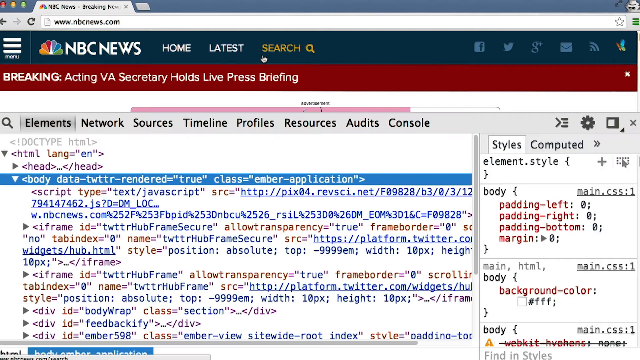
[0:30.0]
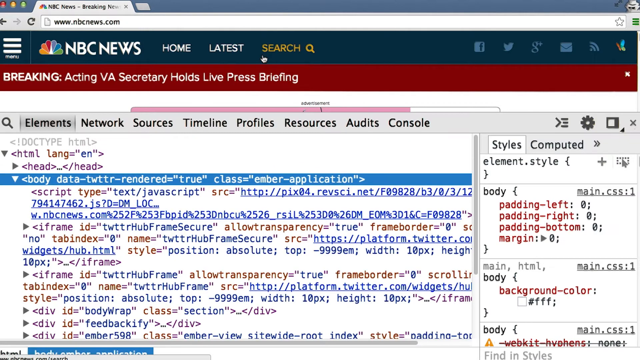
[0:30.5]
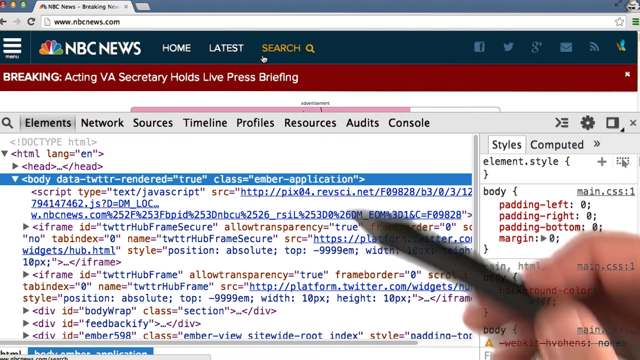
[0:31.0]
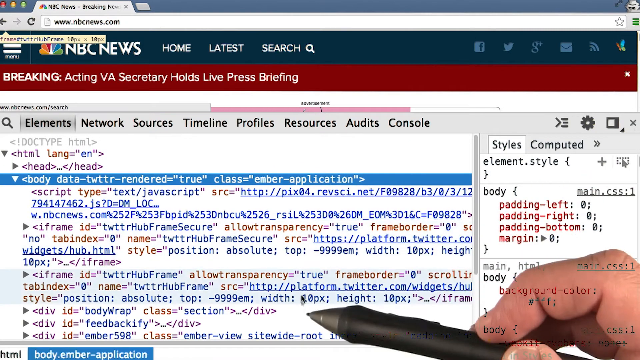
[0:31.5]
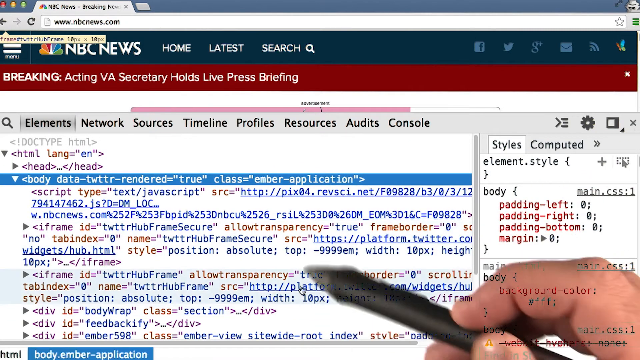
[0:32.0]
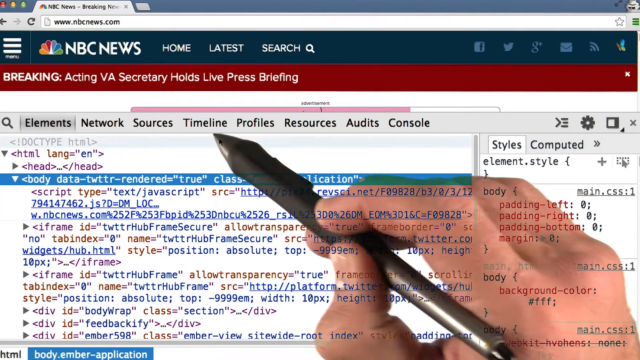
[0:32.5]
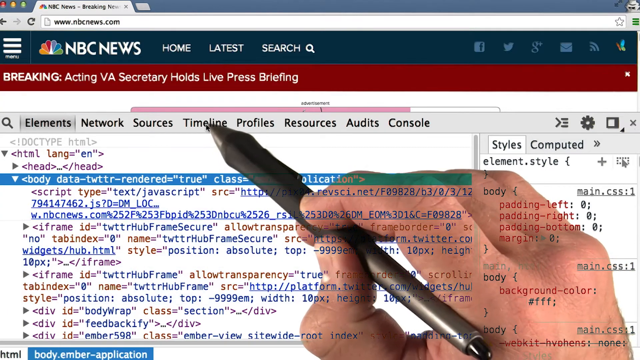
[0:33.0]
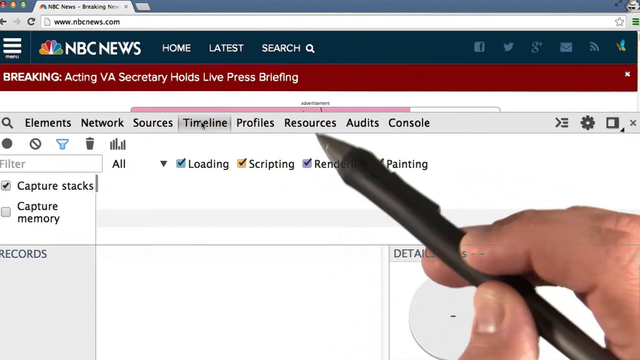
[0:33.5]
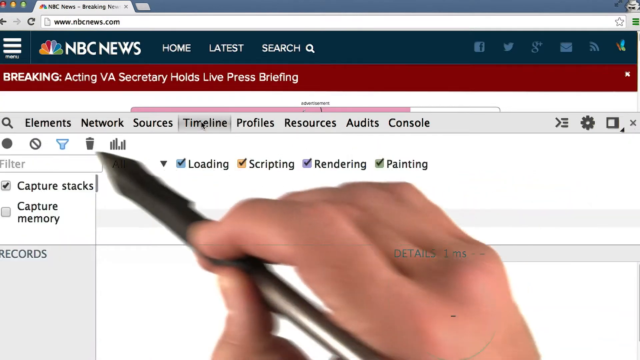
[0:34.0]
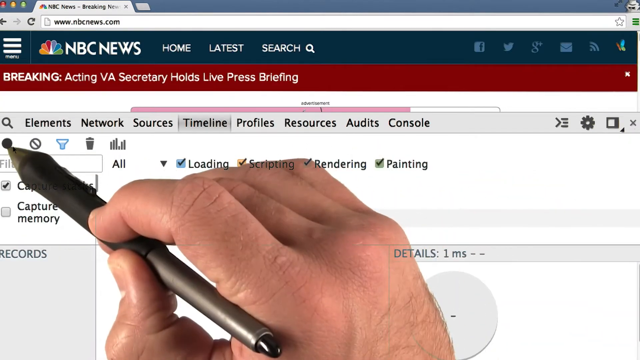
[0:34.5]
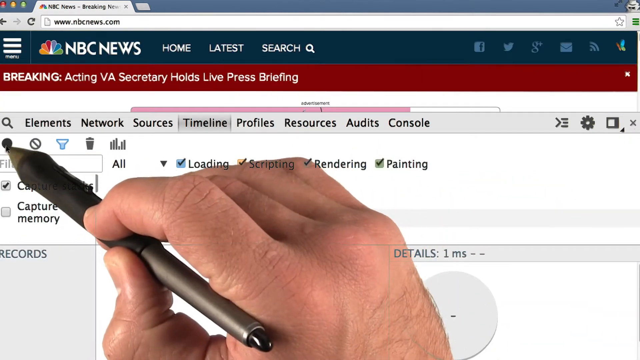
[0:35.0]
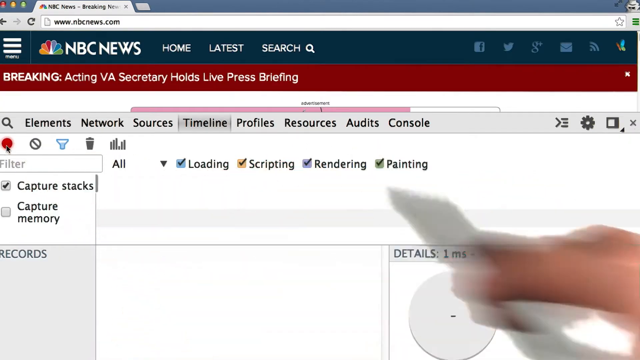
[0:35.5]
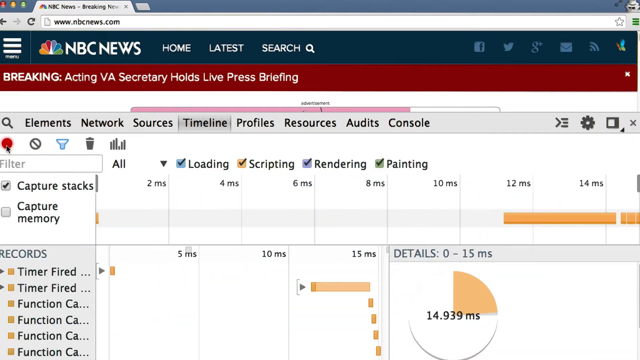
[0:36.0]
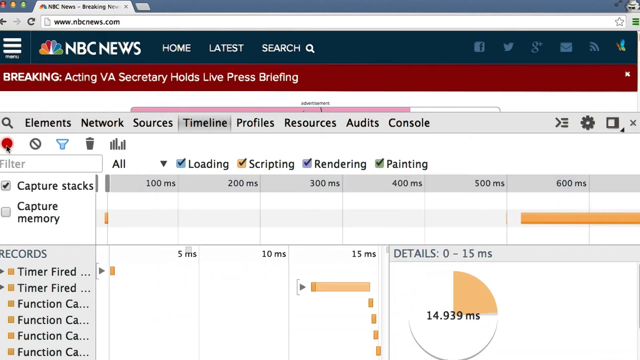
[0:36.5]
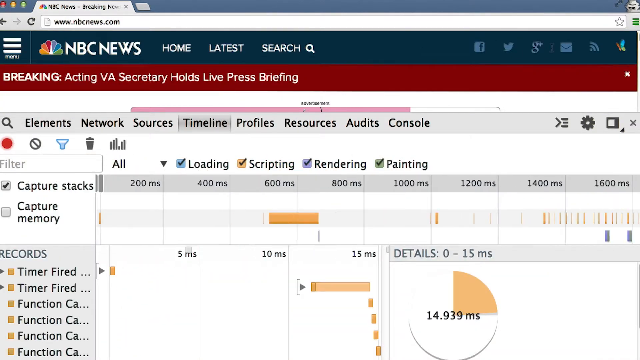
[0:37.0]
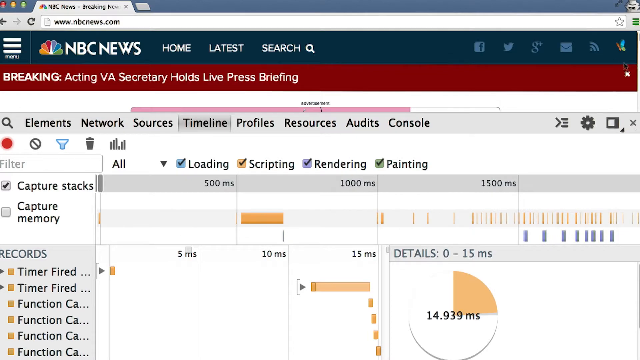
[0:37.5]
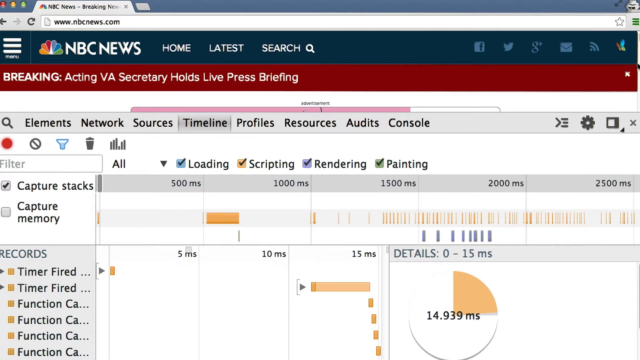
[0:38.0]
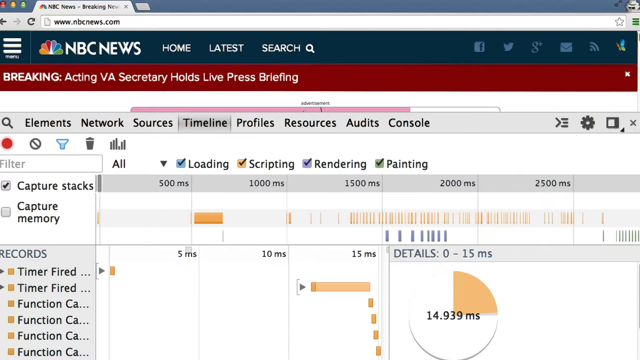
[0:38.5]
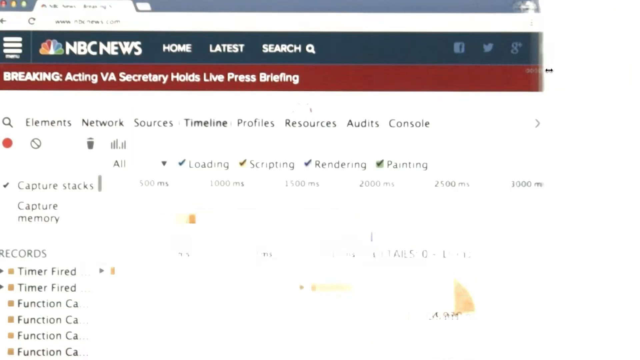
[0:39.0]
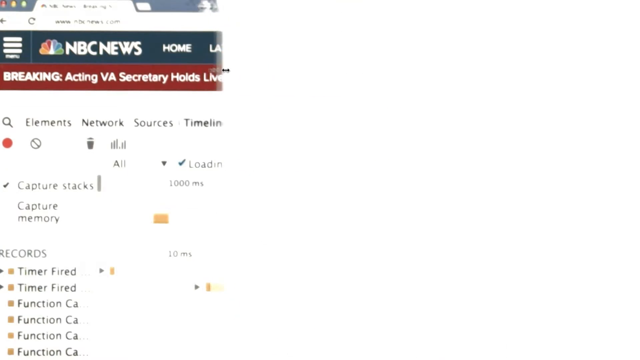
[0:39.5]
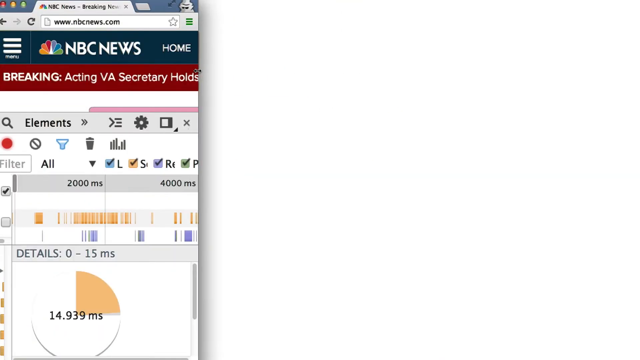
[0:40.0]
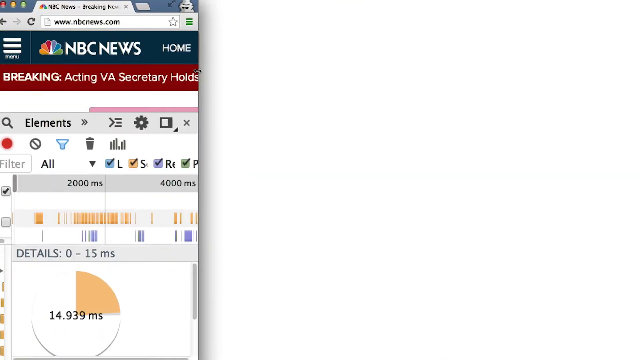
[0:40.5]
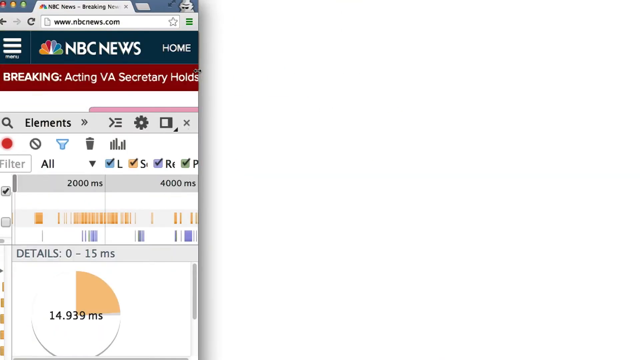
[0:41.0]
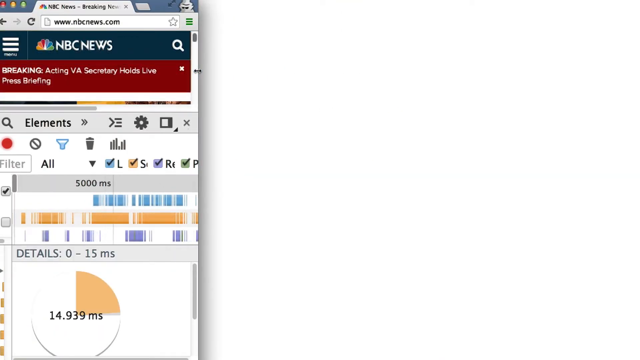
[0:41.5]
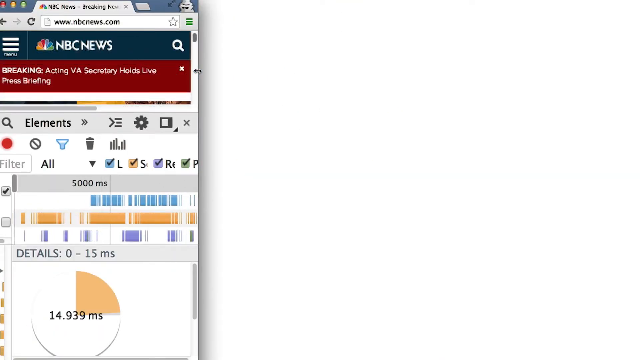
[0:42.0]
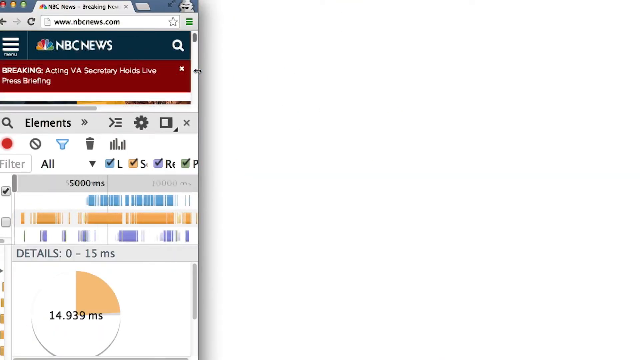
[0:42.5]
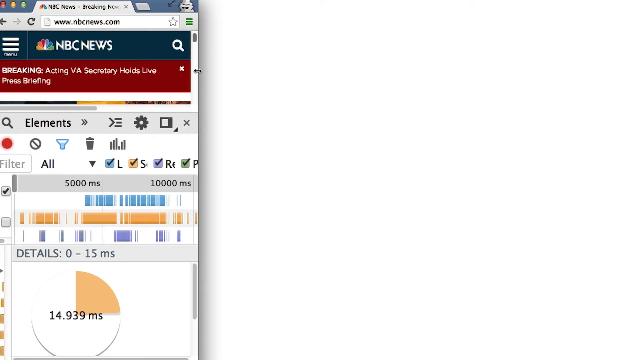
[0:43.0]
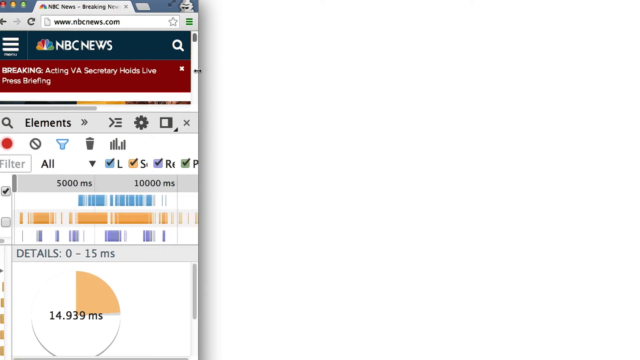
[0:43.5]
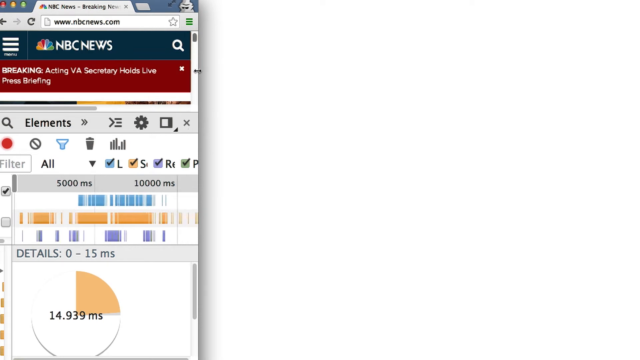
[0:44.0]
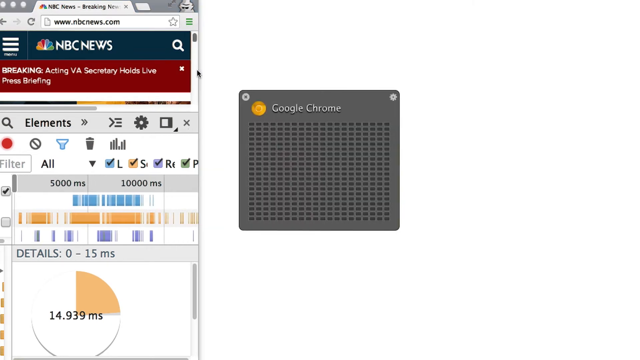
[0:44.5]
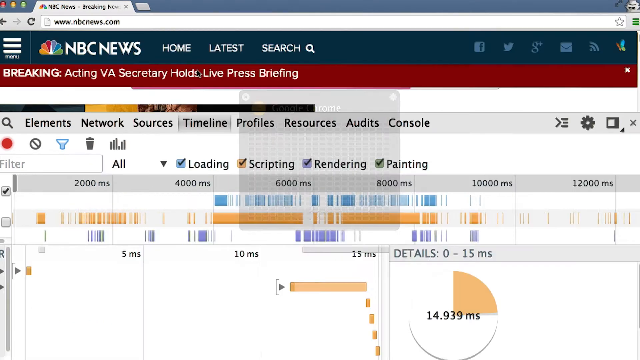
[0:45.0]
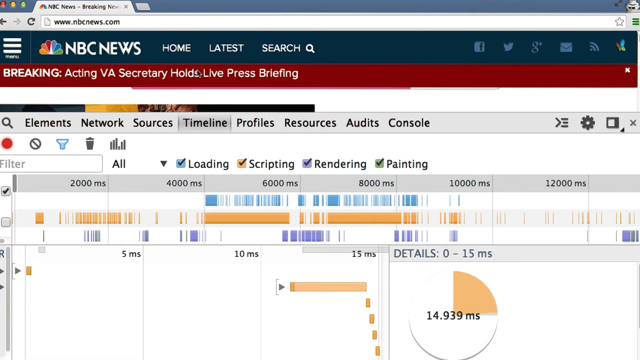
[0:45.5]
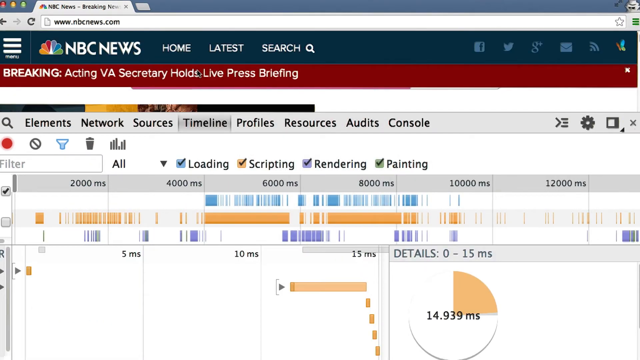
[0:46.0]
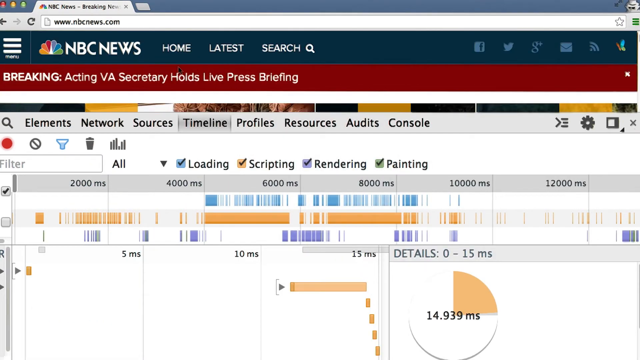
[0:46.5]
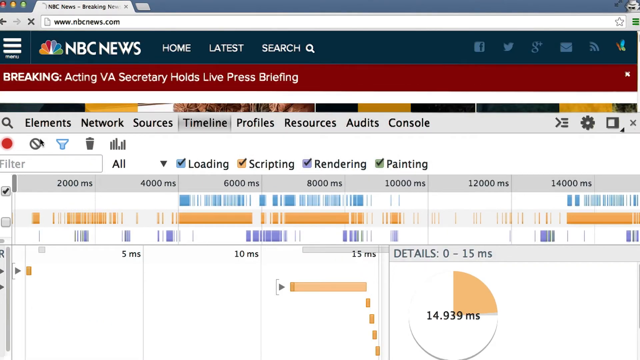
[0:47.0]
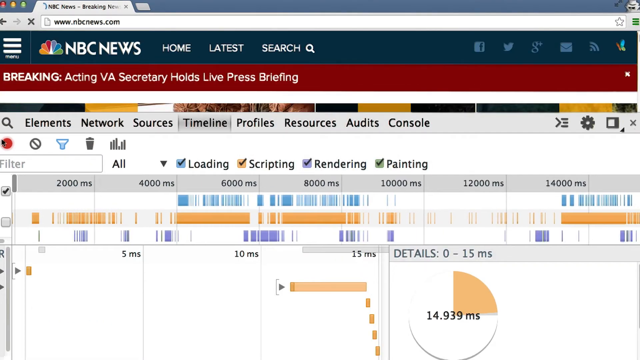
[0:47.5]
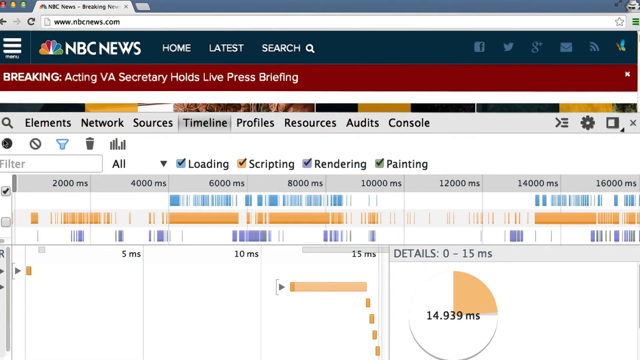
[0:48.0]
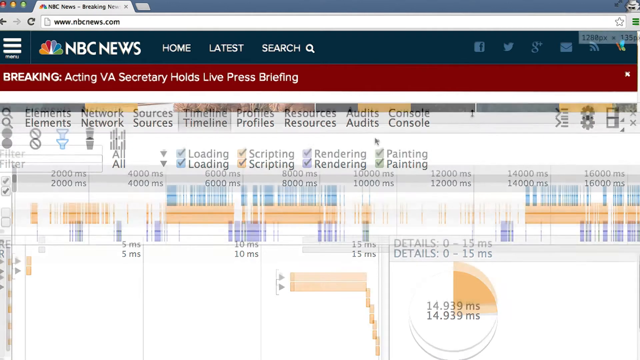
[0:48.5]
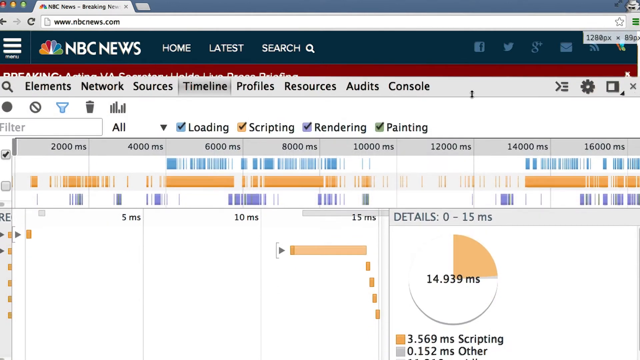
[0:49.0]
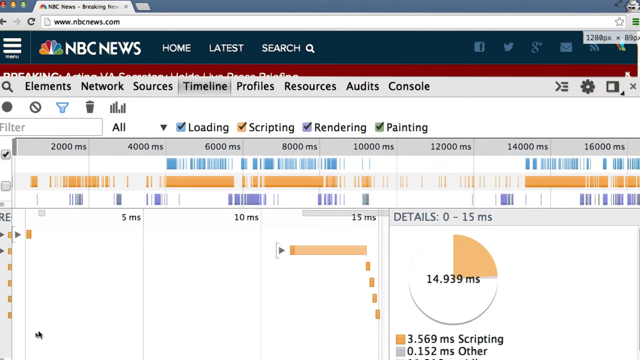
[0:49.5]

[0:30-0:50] The elements panel is showing, and there is now a stylus pointer that makes a dot on the screen whenever it pushes something. The tabs at the top are elements, network, sources, timeline, profiles, resources, audits, and console. The timeline is tapped, and then a color. There is a red bar, a filter, a trash can, and some graphs, and the view scrolls across. The window is then shrunk width-wise while staying full height, and it shows 500 milliseconds, 5,000, and 10,000. A Google Chrome black square briefly appears in the middle and quickly disappears. The window returns to full screen. The mouse moves visibly on the screen, first from left to right toward the top, then diagonally from the top right-ish toward the bottom left. The details are in milliseconds, with kind of a bar chart and then a pie chart.